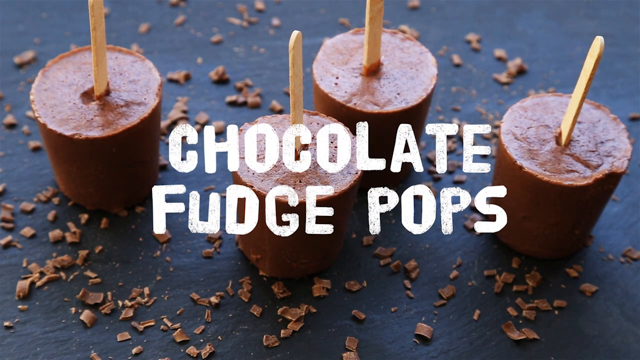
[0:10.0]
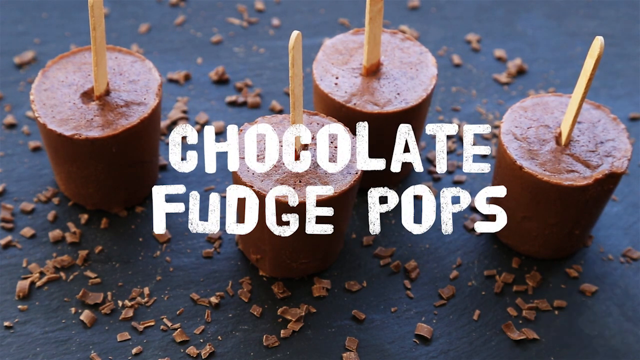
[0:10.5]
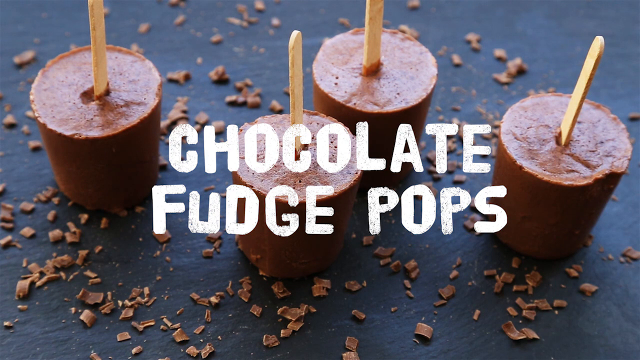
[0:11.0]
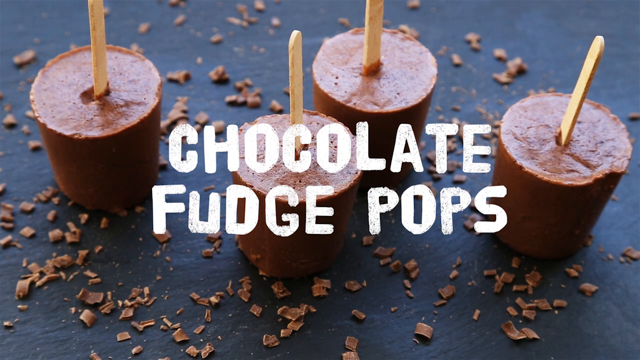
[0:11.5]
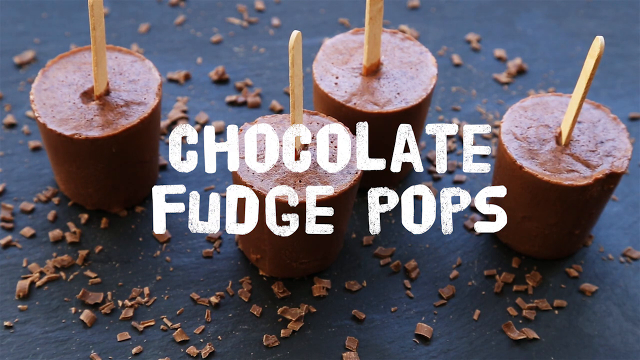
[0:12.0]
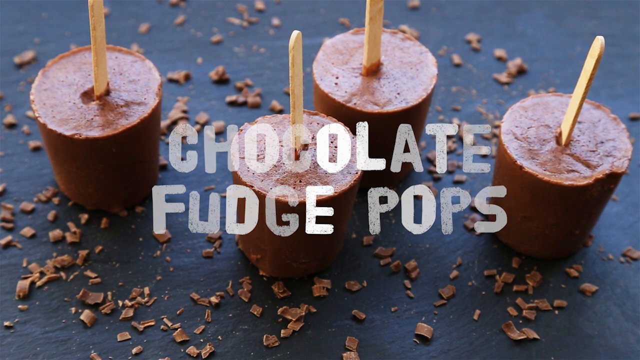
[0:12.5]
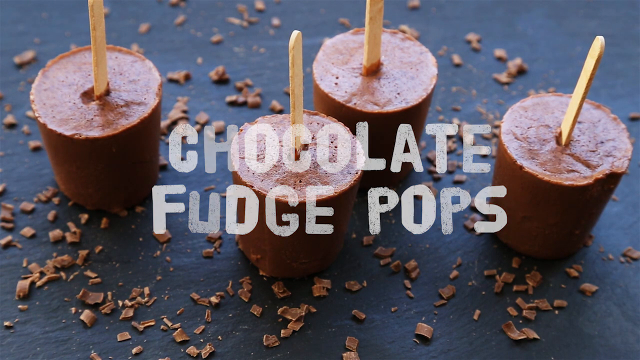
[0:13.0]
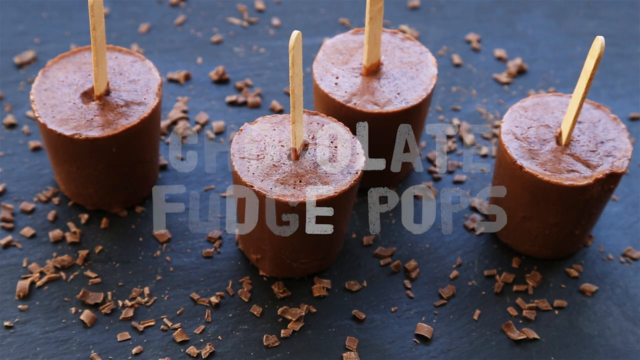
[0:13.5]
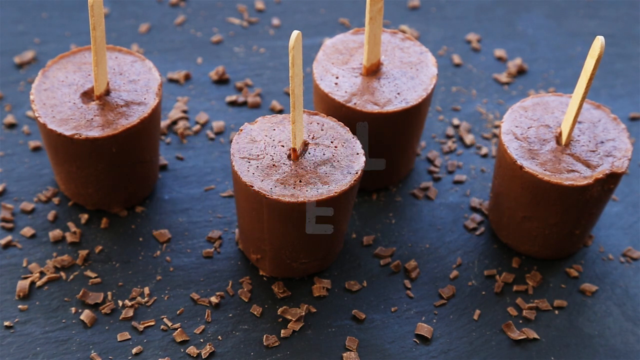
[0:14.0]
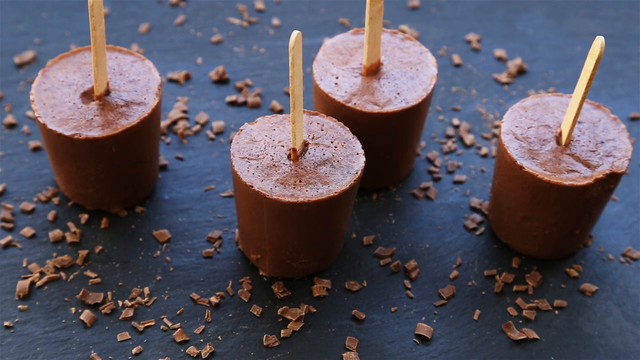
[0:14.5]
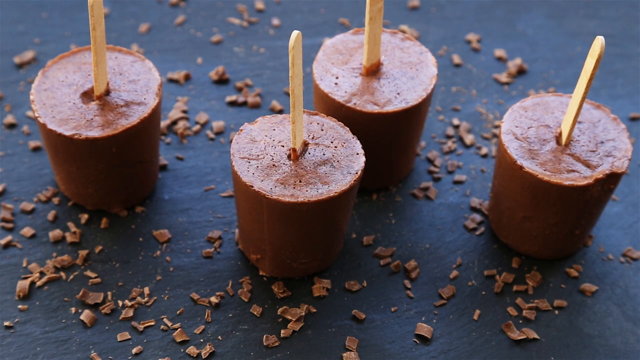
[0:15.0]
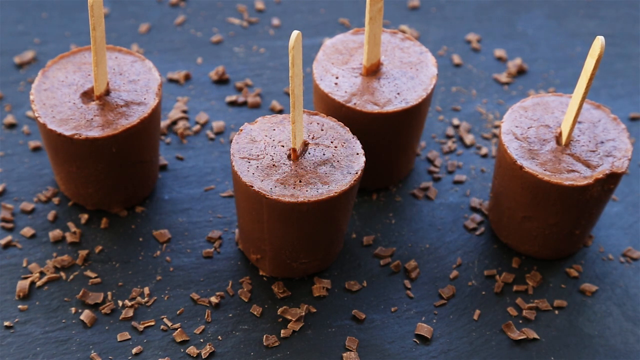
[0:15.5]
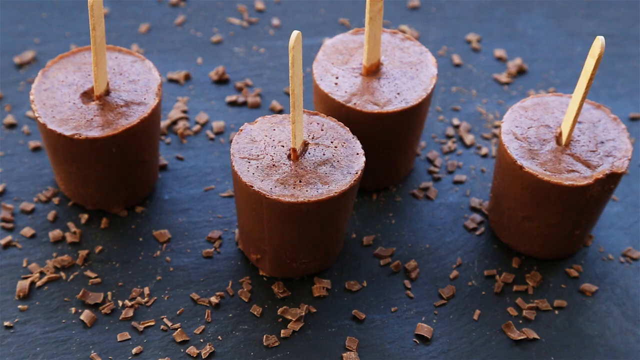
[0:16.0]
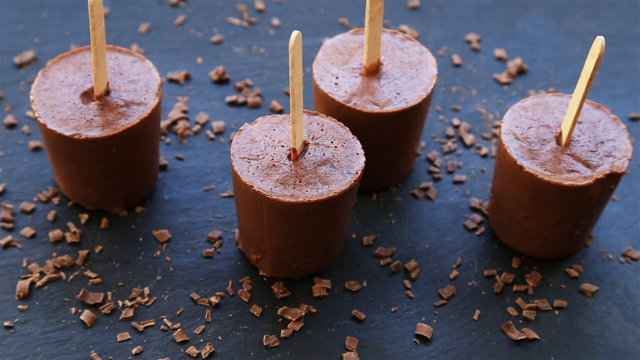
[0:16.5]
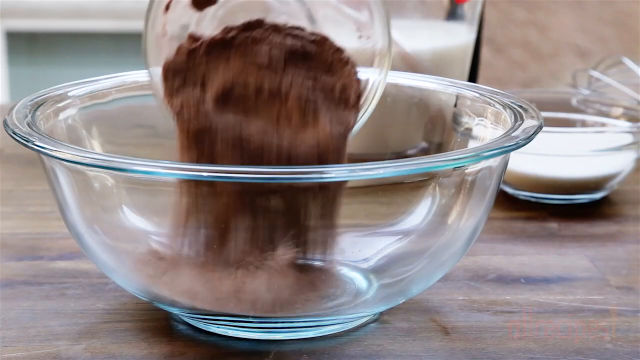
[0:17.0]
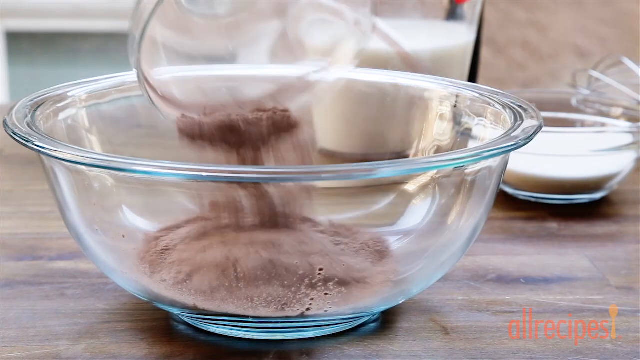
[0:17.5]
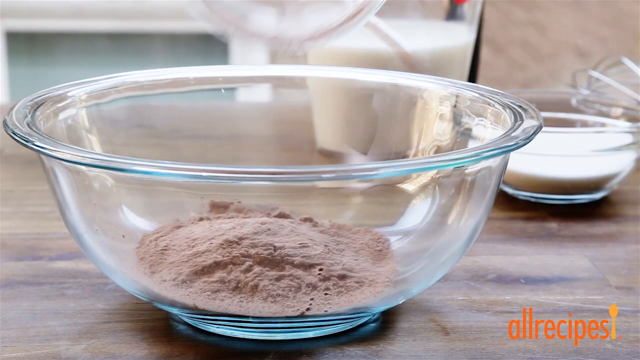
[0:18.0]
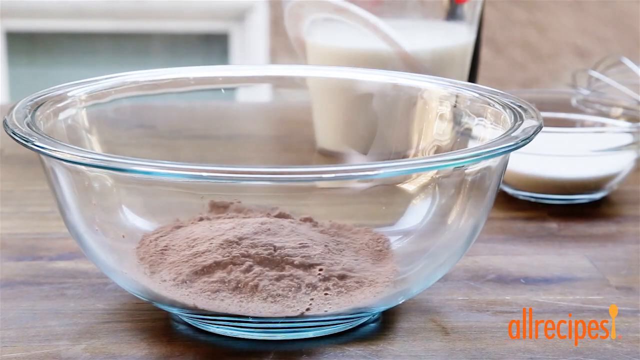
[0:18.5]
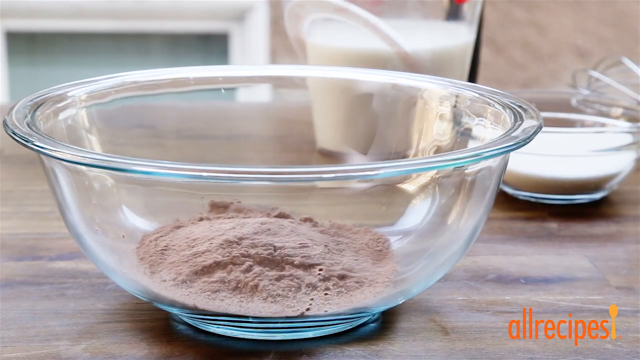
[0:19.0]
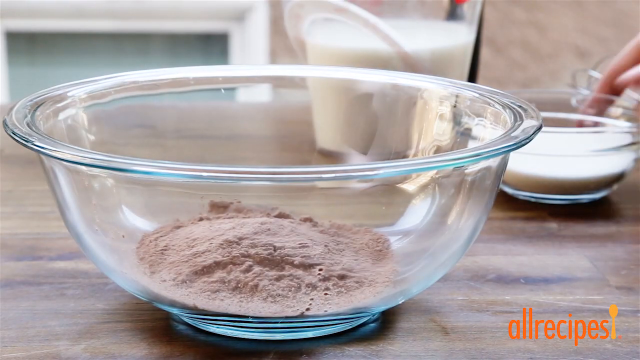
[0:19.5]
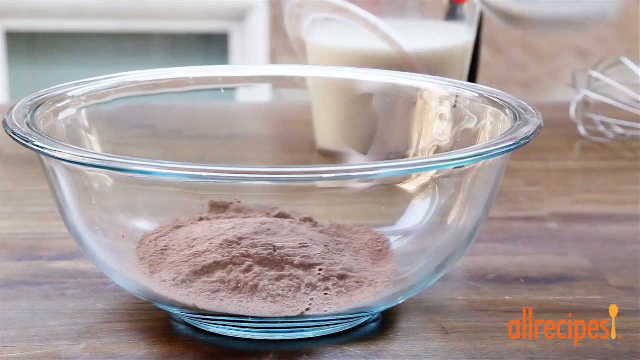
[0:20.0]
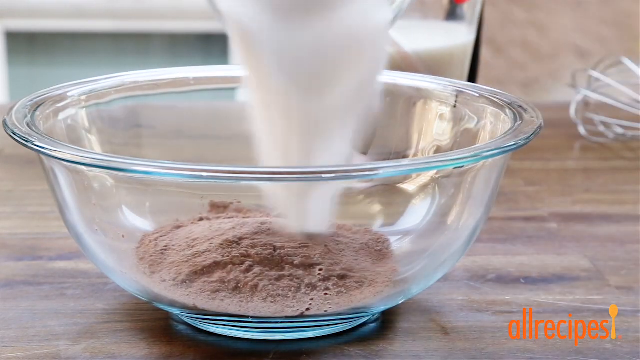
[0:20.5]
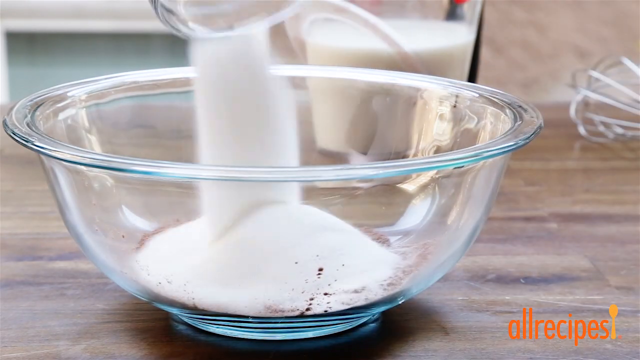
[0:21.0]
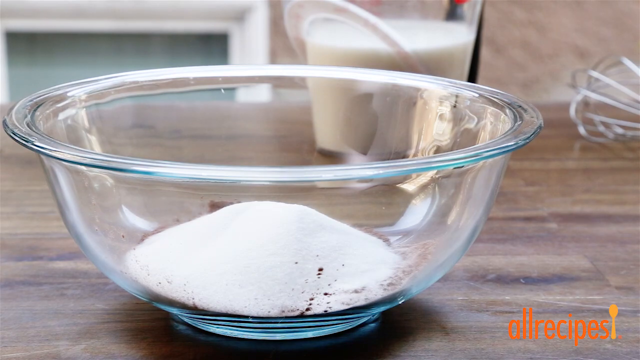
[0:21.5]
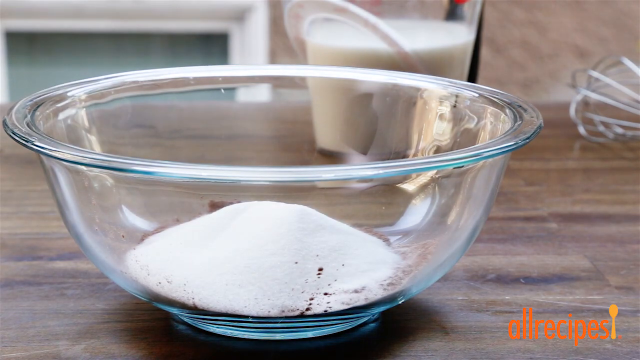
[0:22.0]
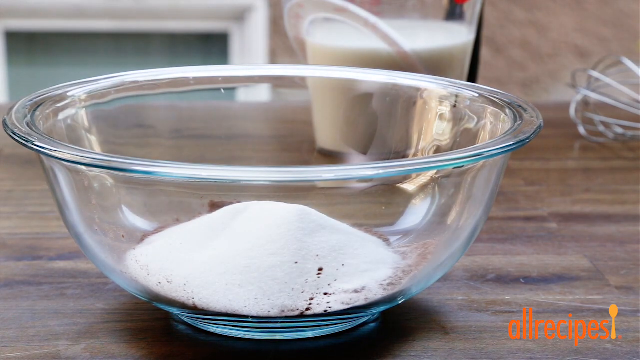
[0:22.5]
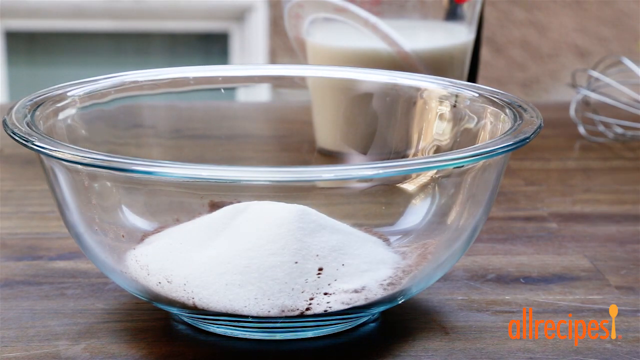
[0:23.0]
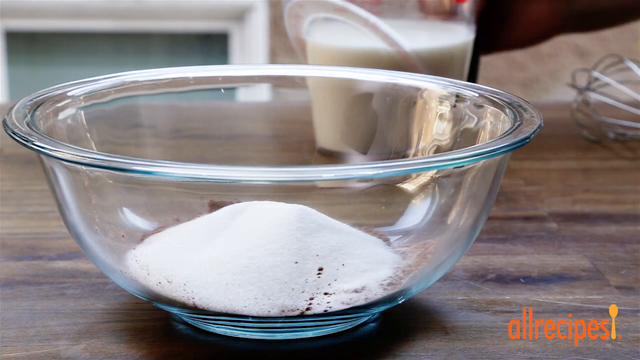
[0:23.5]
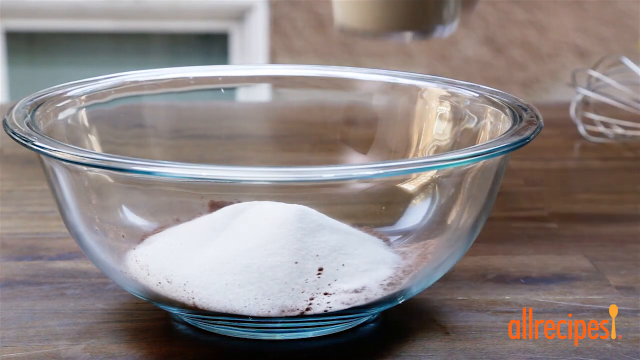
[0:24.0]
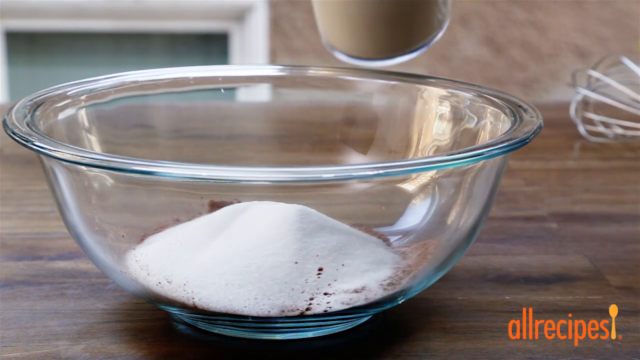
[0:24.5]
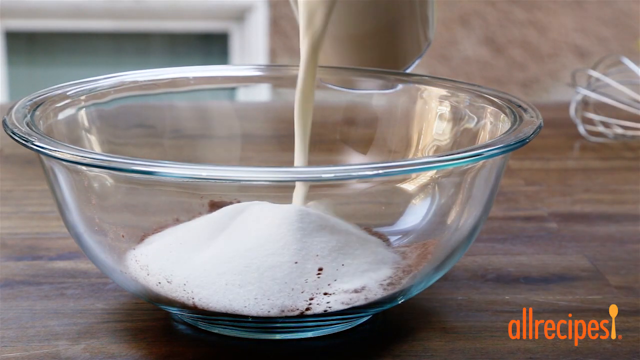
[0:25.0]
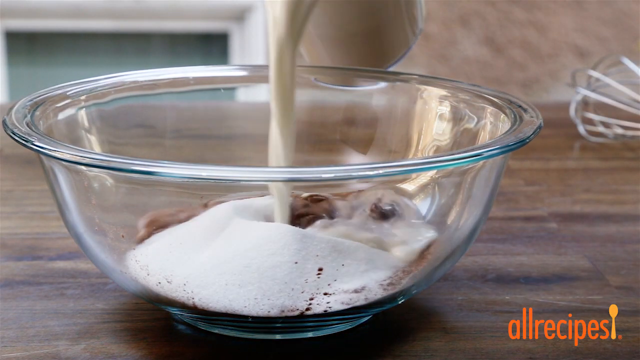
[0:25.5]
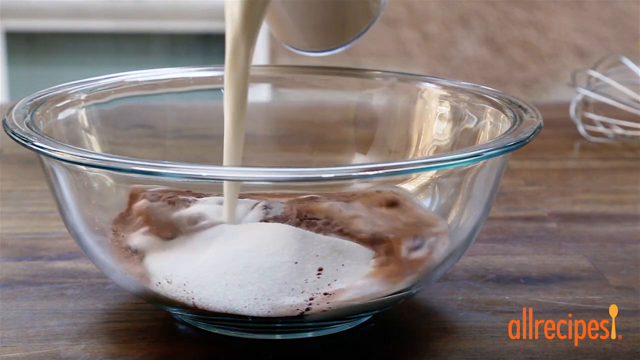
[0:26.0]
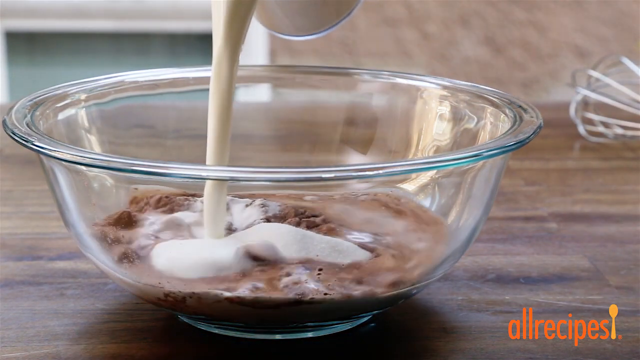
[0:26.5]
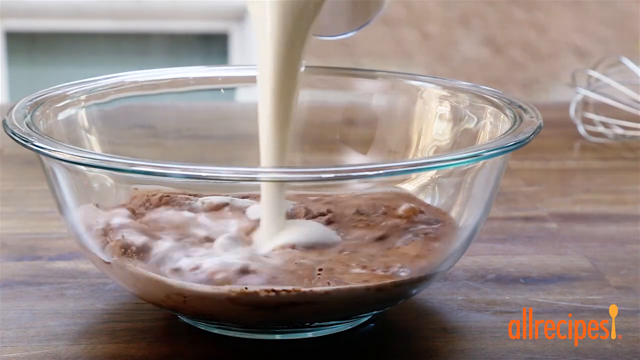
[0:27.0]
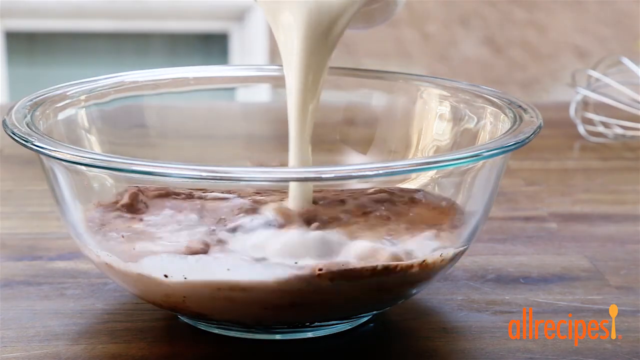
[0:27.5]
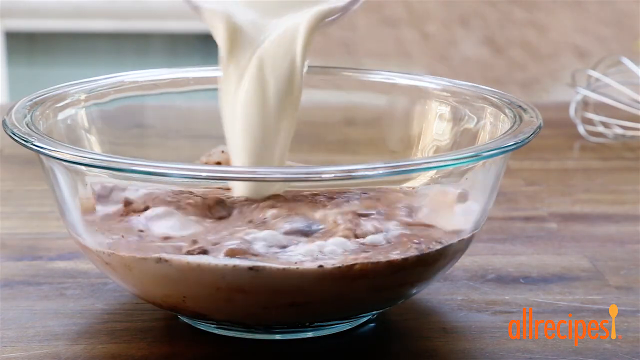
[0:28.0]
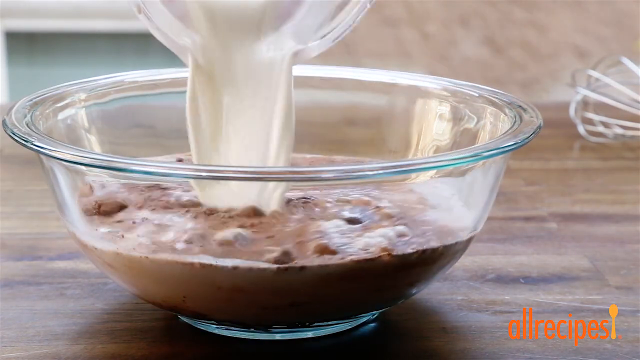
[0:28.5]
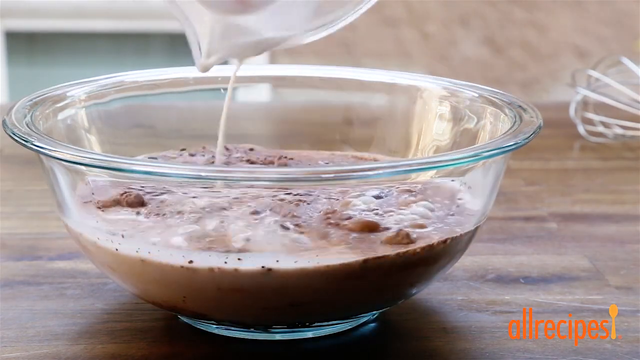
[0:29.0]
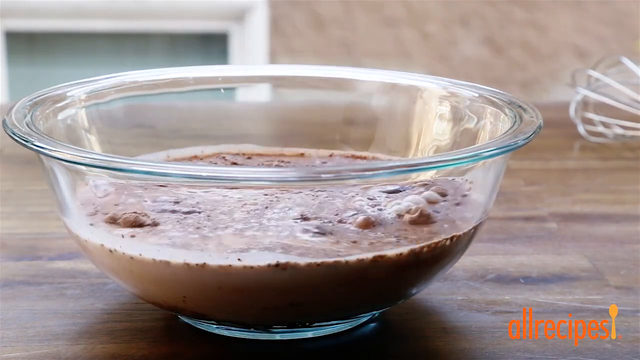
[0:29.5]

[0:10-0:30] The text "chocolate fudge pops" is shown in white over four fudge pops, little chocolate cylinders with little brown popsicle sticks coming out of them. The ground is covered in brown chocolate flakes on a black surface. The words fade away and the scene transitions to a kitchen area with a close-up of a clear bowl, as another bowl pours a powdery chocolate into it. A hand appears on the right and grabs a white bowl with a white powder in it from behind the front bowl, and the powder is poured into the bigger bowl. Then a measuring cup with what looks like possibly a light white liquid, maybe milk, is poured into the big bowl with the rest of the ingredients.